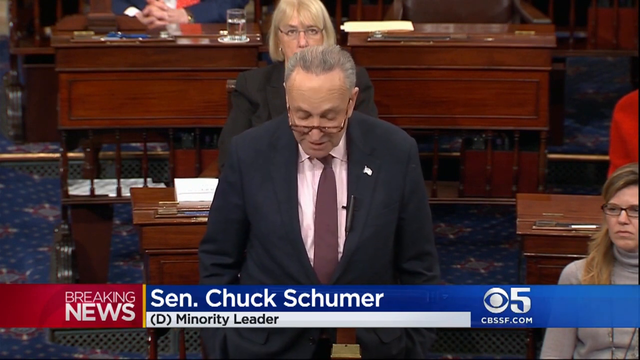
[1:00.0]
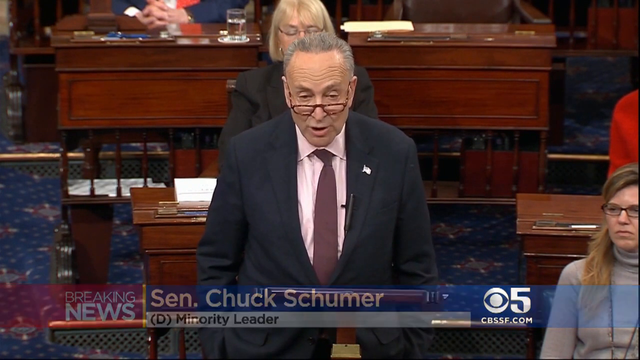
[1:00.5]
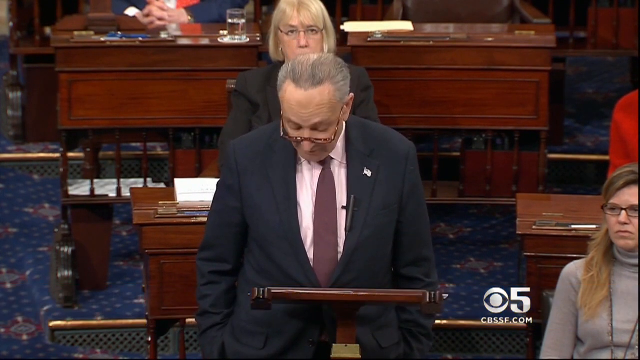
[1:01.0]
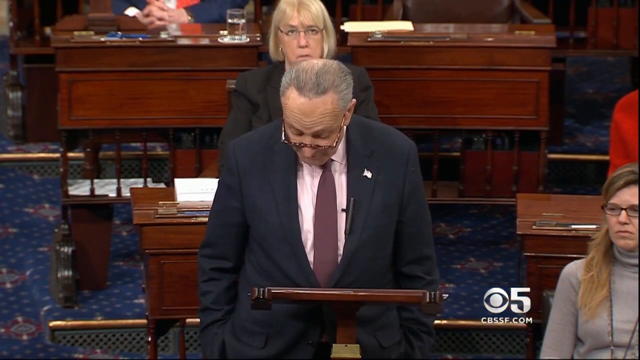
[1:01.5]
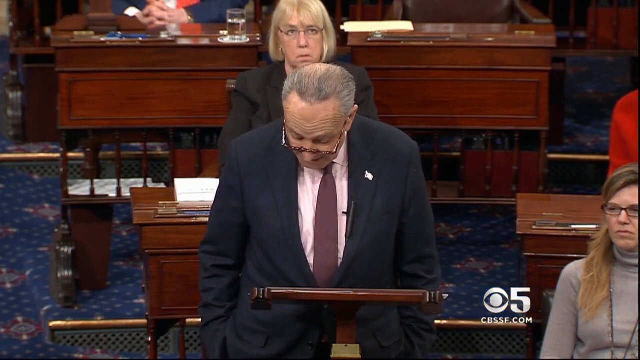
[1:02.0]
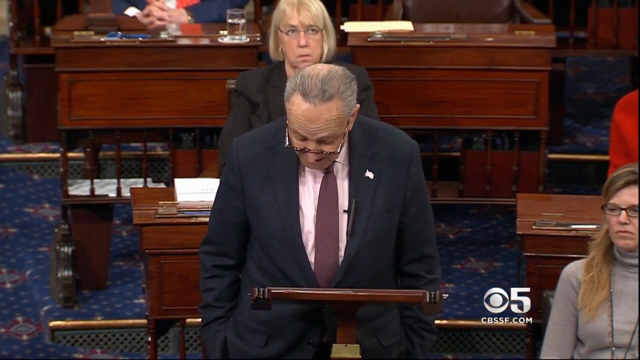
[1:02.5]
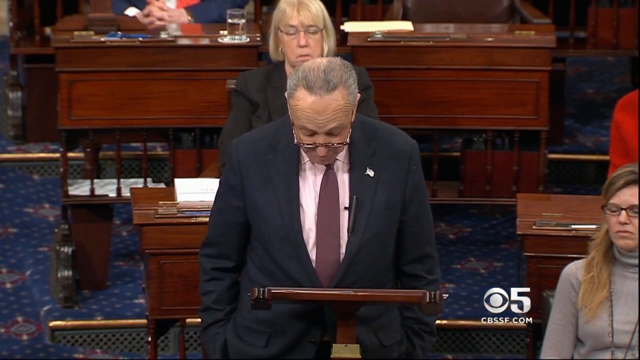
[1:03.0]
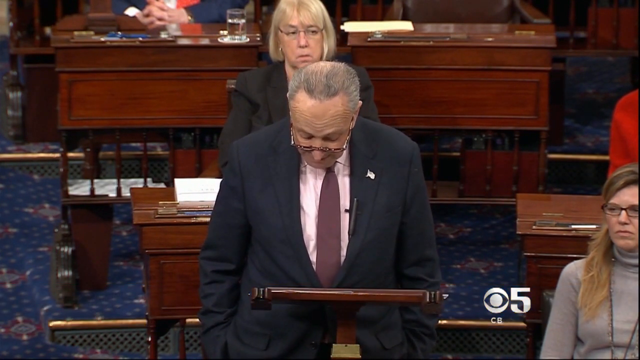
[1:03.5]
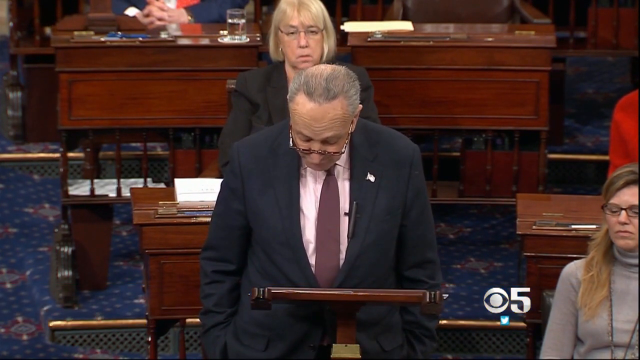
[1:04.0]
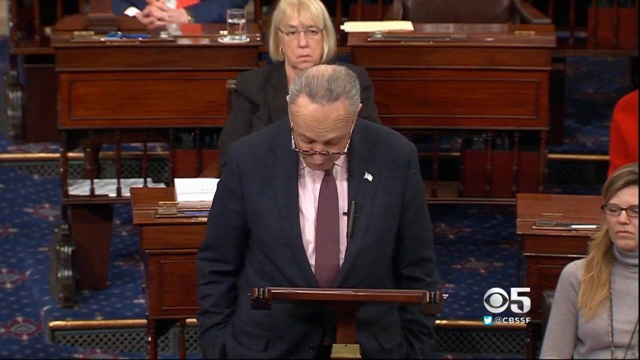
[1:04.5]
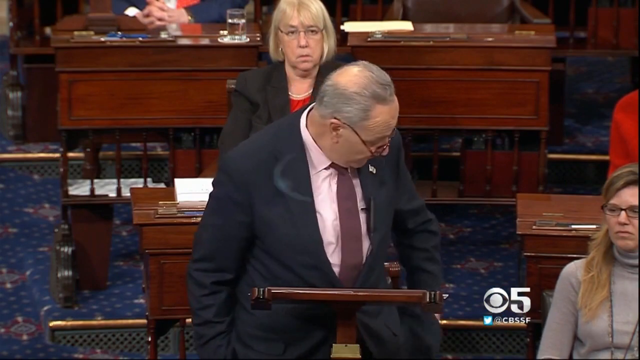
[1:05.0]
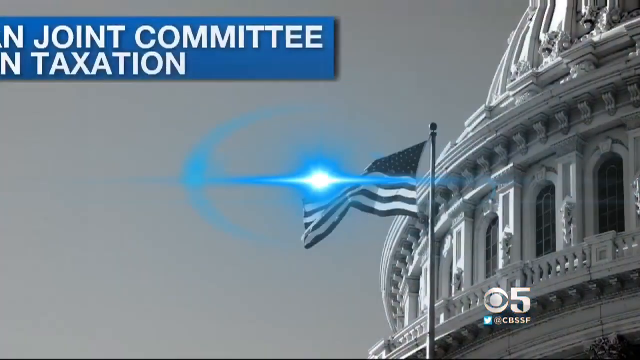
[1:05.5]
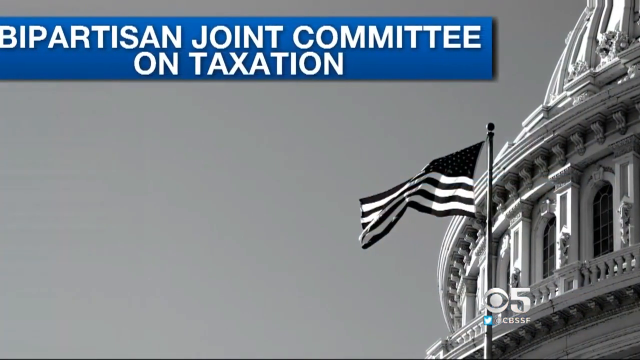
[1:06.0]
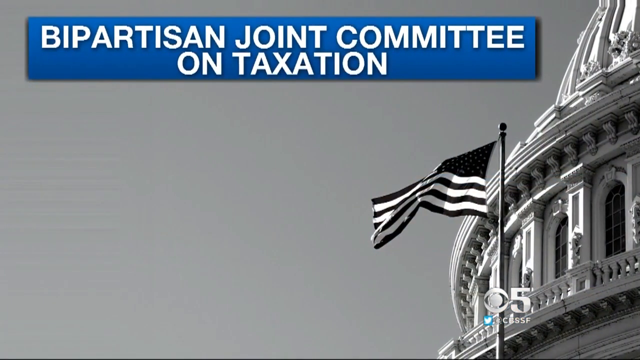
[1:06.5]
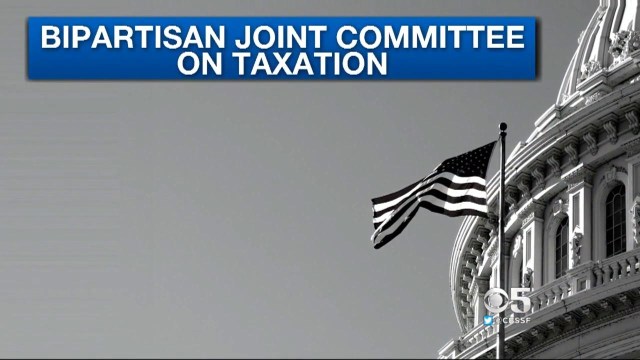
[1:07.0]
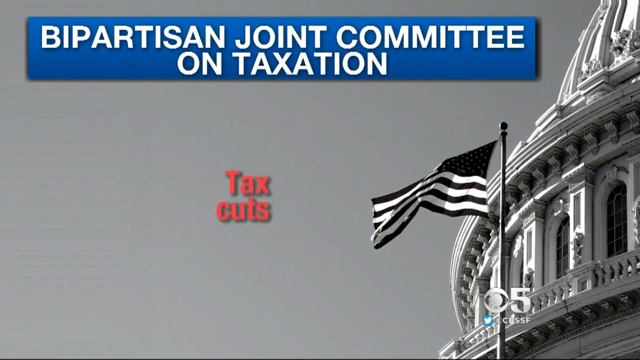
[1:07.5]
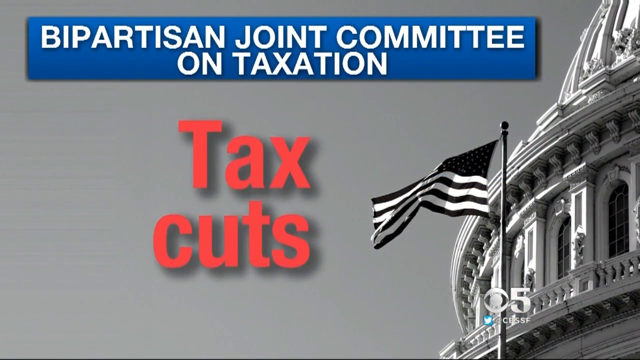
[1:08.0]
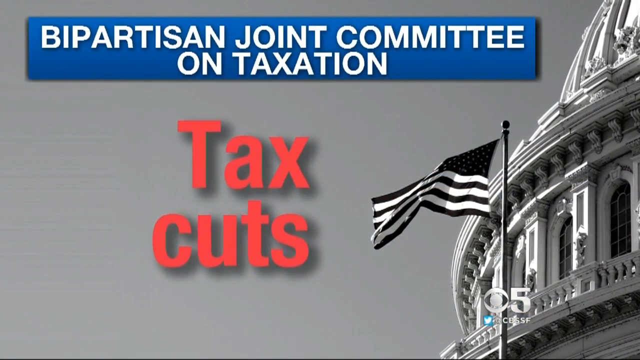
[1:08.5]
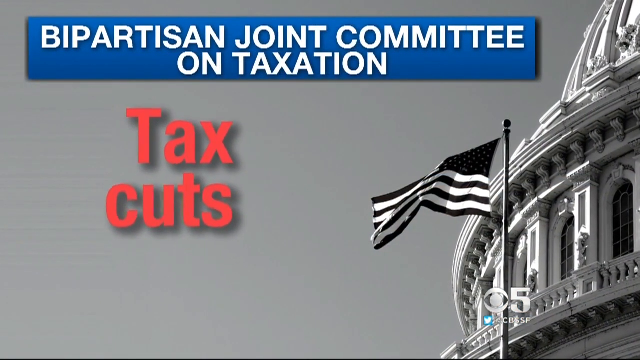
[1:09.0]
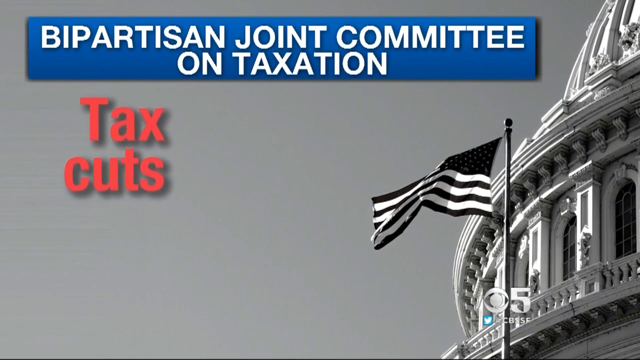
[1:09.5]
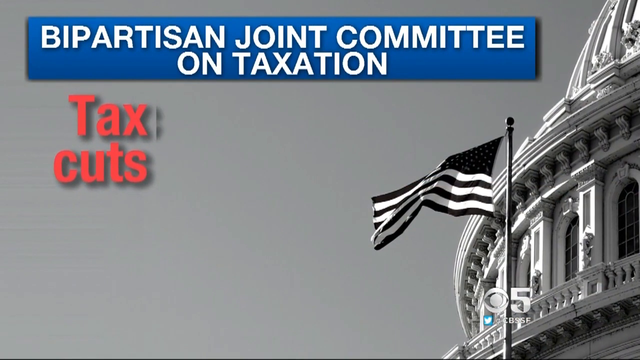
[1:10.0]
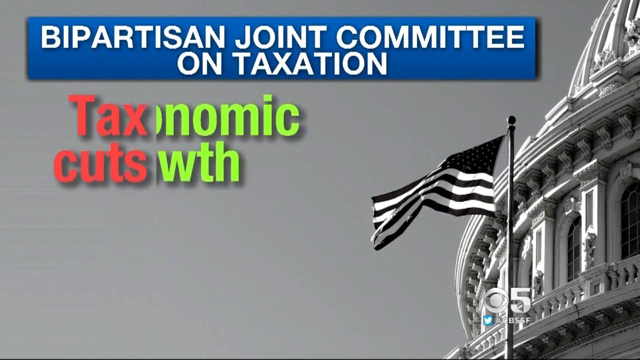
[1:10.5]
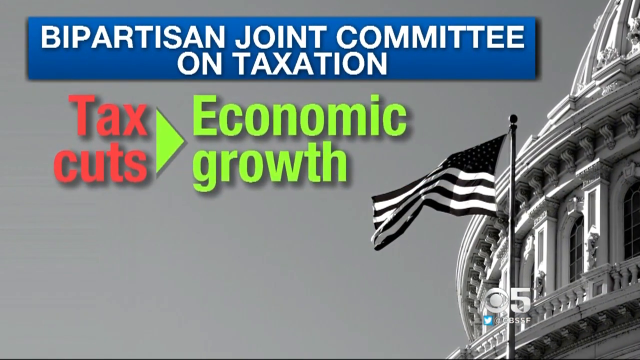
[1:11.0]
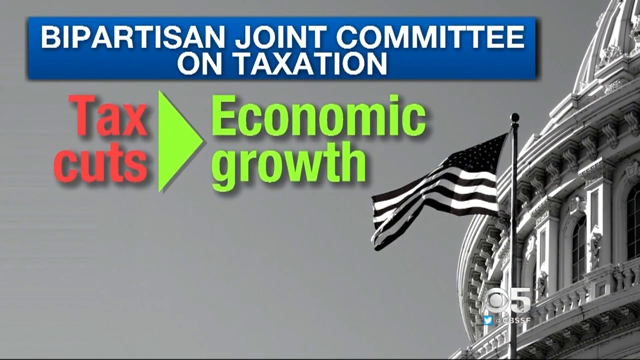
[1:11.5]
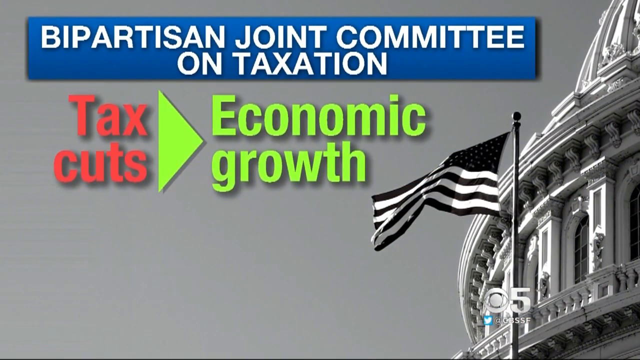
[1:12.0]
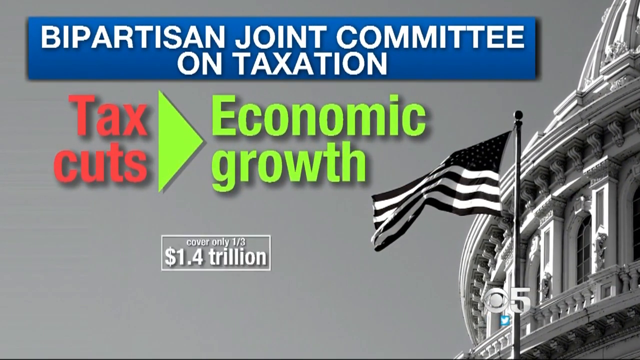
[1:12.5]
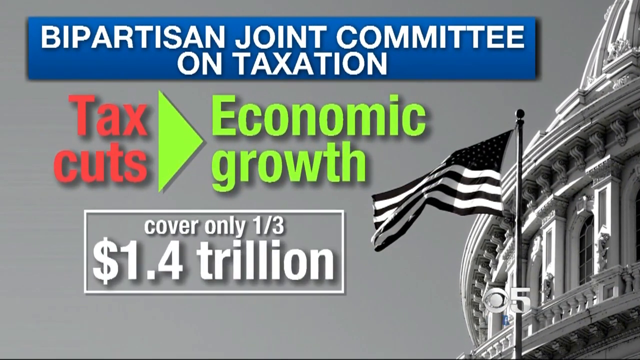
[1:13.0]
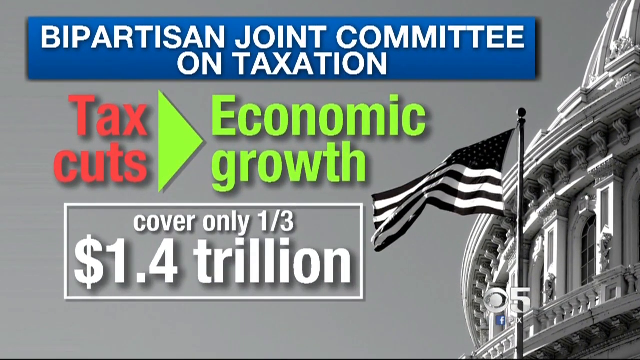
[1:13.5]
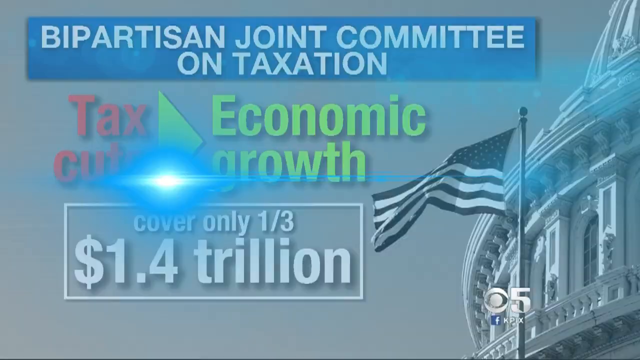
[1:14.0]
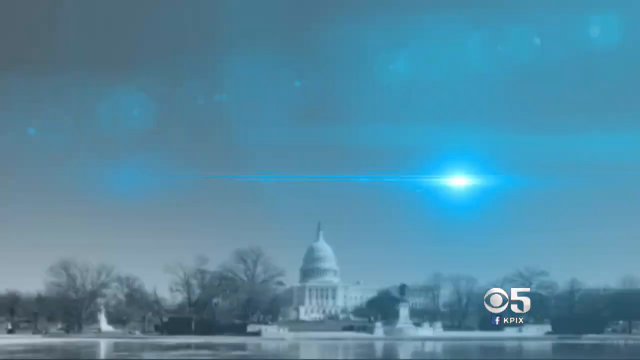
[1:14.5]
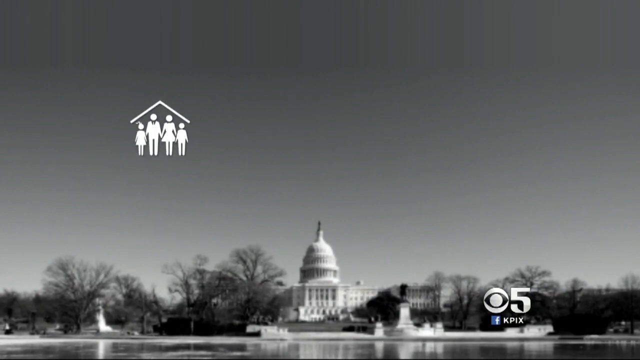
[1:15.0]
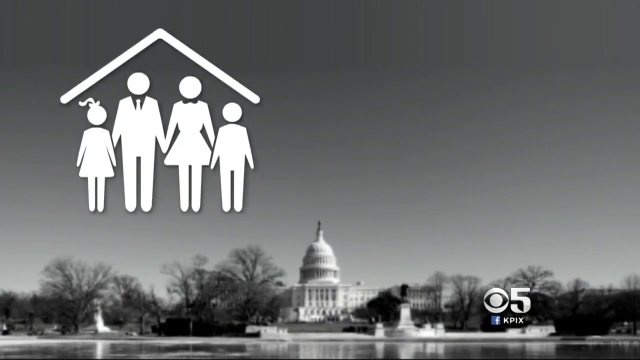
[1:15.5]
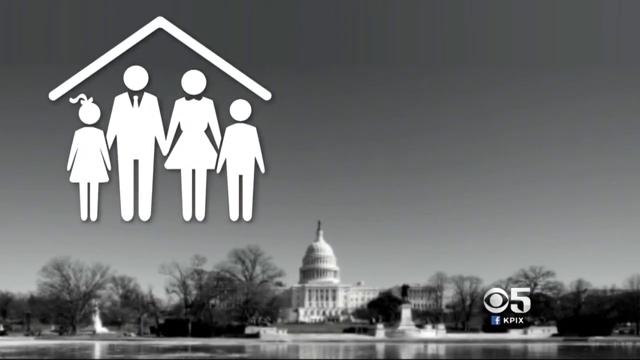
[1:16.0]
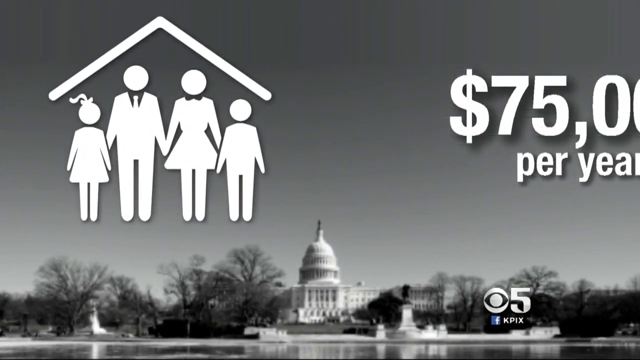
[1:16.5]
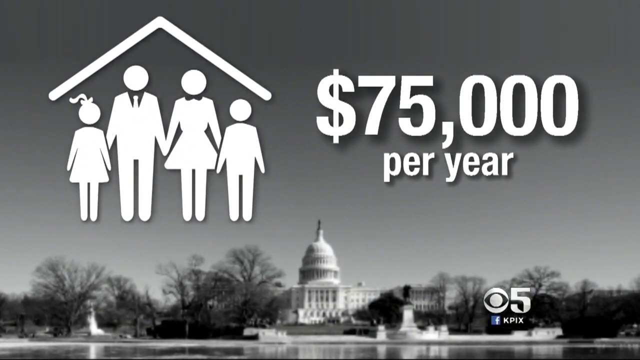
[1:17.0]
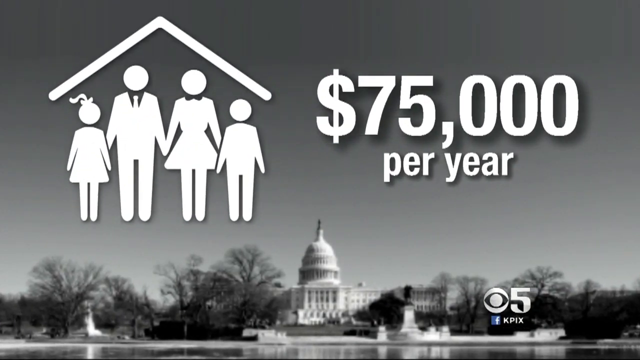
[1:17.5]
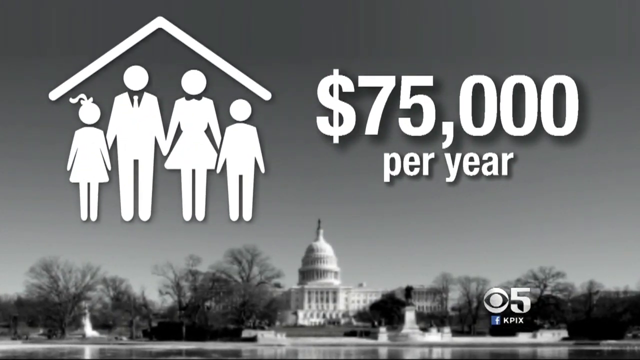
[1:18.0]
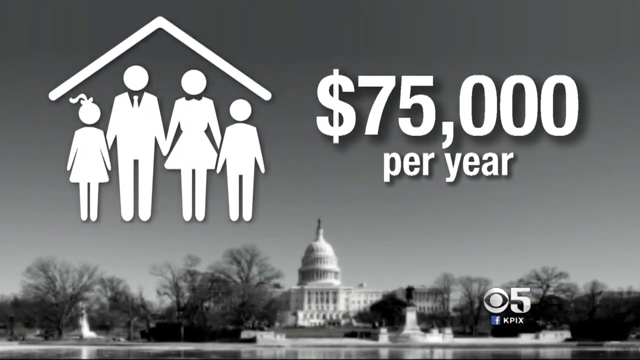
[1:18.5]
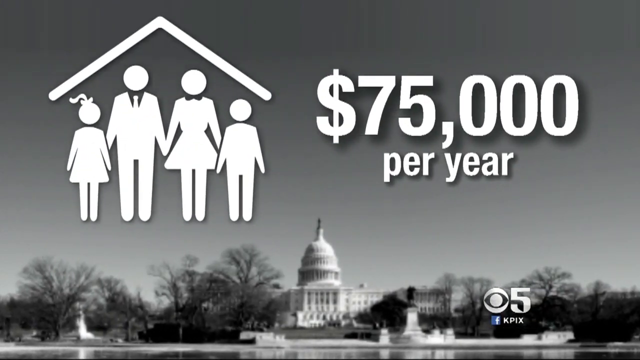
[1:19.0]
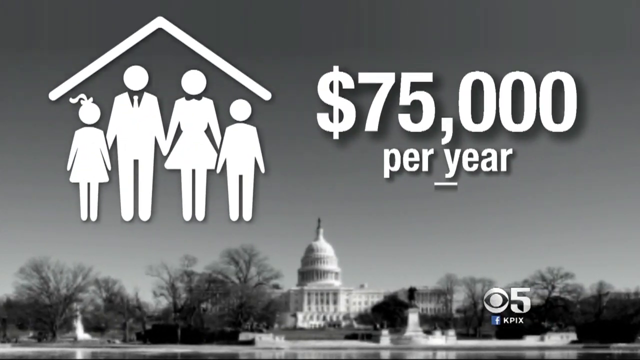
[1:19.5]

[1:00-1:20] Senator Chuck Schumer, minority leader for the Democrats, is talking. He looks down, then looks up, then turns around, and just before he continues talking the video cuts to a different screen. This screen has a black and white background showing part of Capitol Hill and the flag. Text reads "Bipartisan Joint Committee on Taxation" in white on a blue background, "tax cuts" in red, "economic growth" in green, and "cover only one third, 1.4 trillion" in white. Then "$75,000 per year" appears alongside an outline image of what looks like a family of four: a married couple with a boy and a girl. A green dollar sign begins to appear followed by a number with a comma, probably four digits, but the rest of the number is unclear.